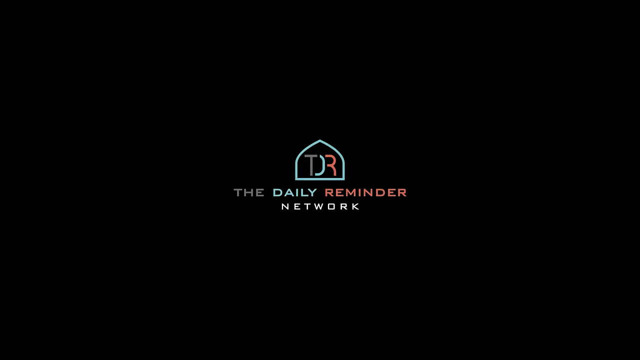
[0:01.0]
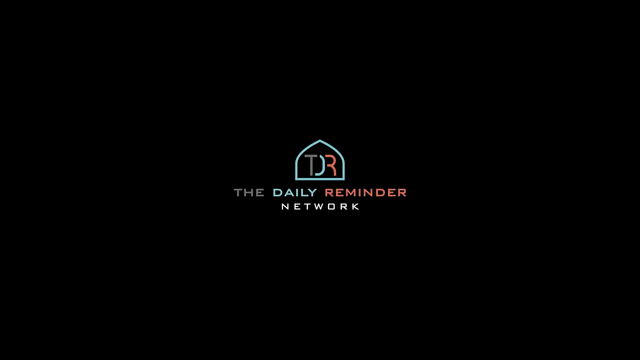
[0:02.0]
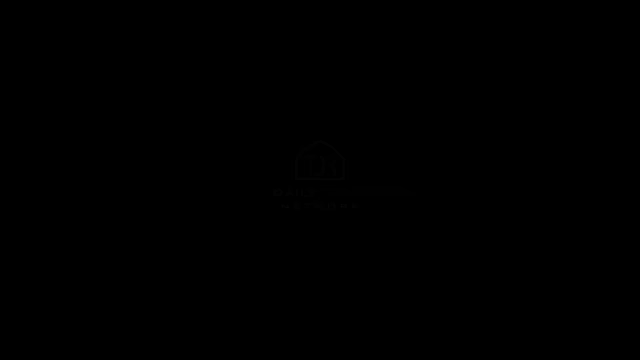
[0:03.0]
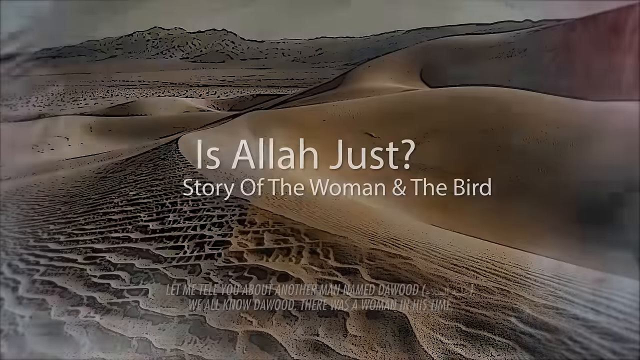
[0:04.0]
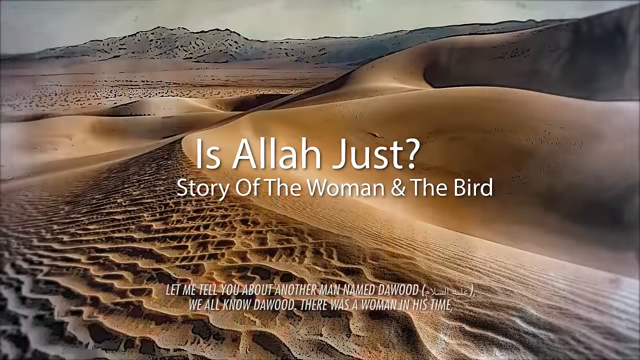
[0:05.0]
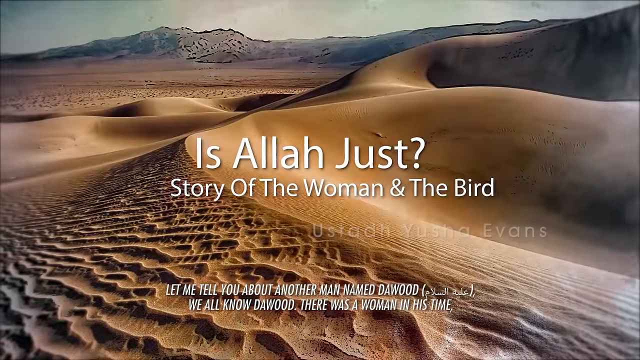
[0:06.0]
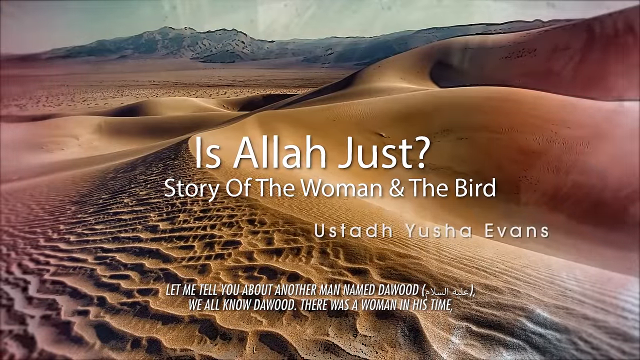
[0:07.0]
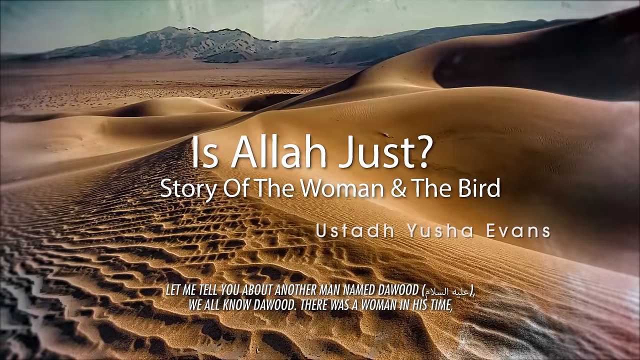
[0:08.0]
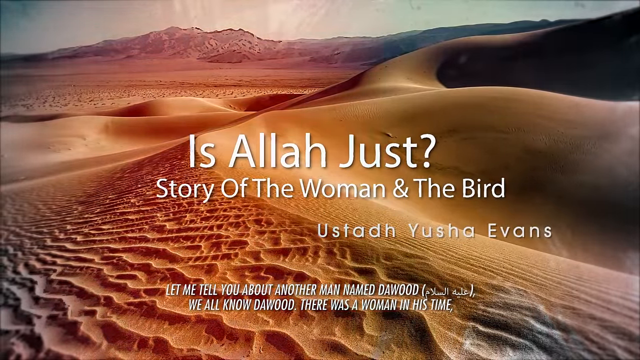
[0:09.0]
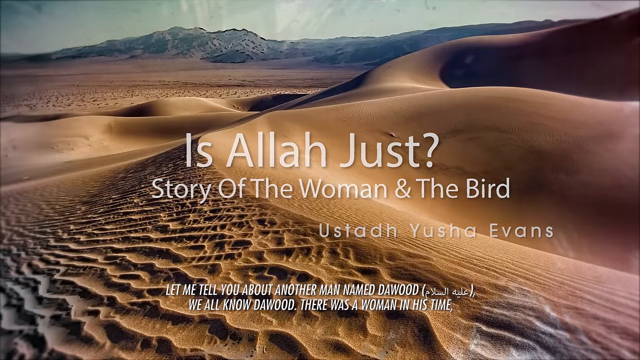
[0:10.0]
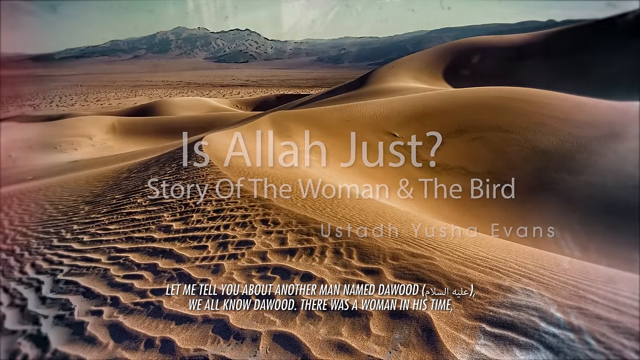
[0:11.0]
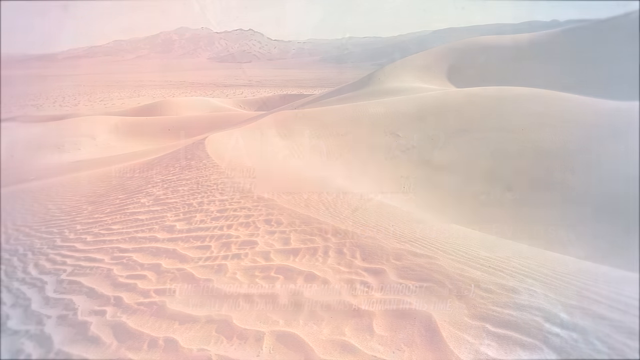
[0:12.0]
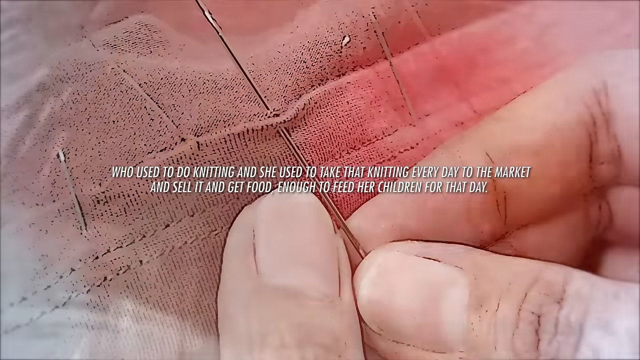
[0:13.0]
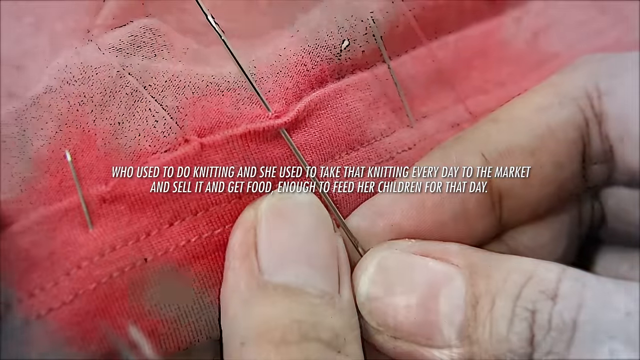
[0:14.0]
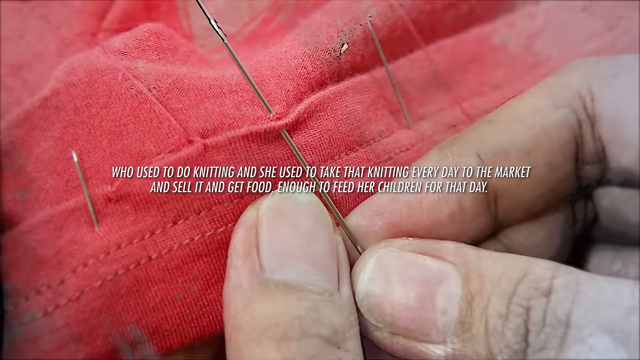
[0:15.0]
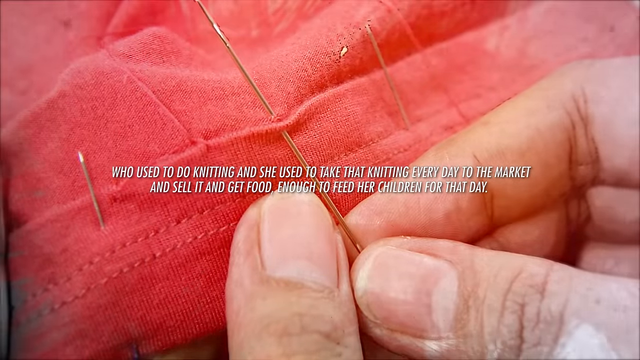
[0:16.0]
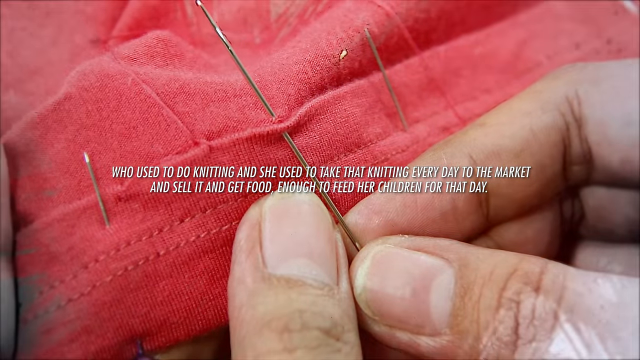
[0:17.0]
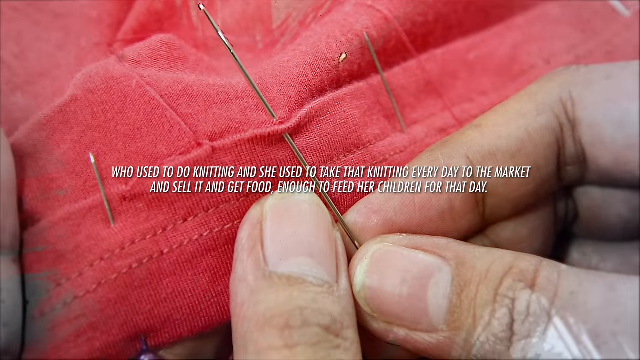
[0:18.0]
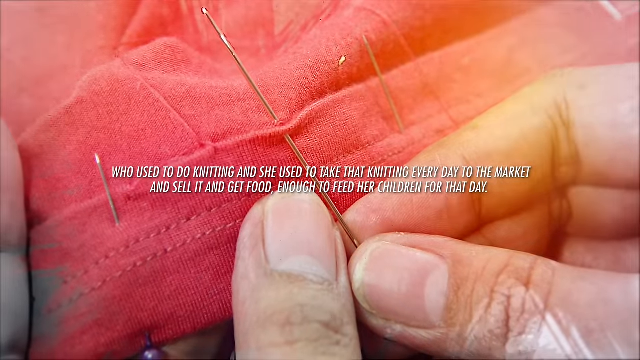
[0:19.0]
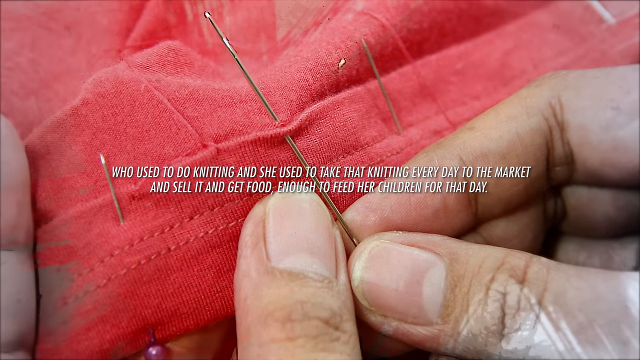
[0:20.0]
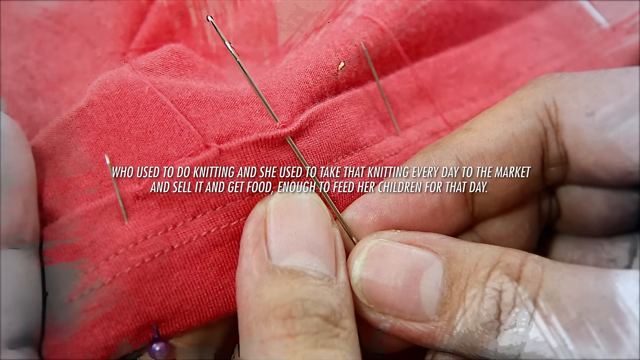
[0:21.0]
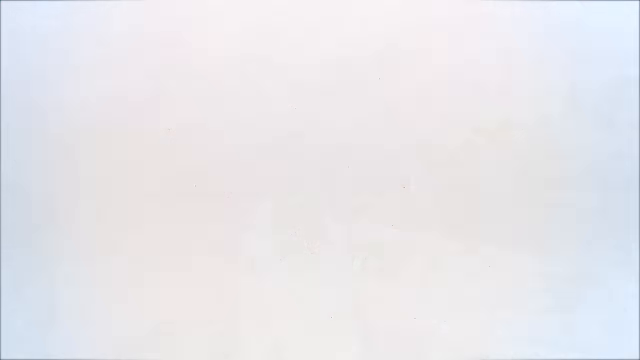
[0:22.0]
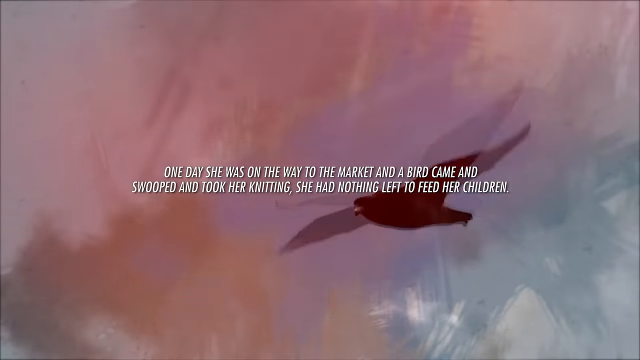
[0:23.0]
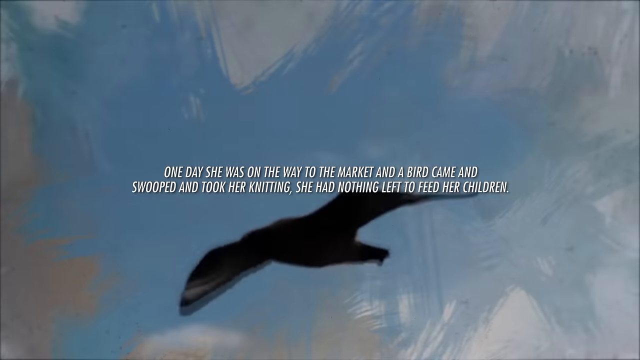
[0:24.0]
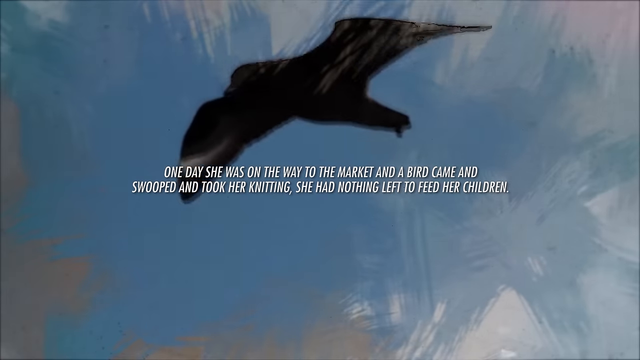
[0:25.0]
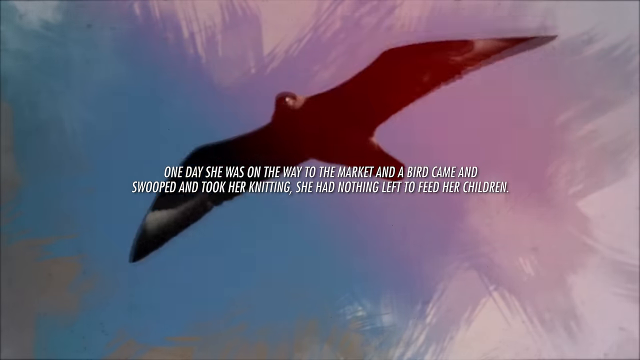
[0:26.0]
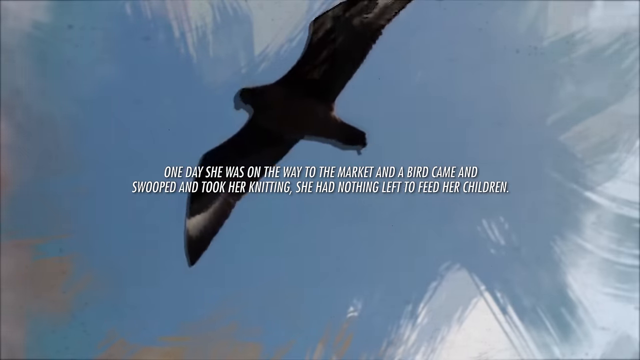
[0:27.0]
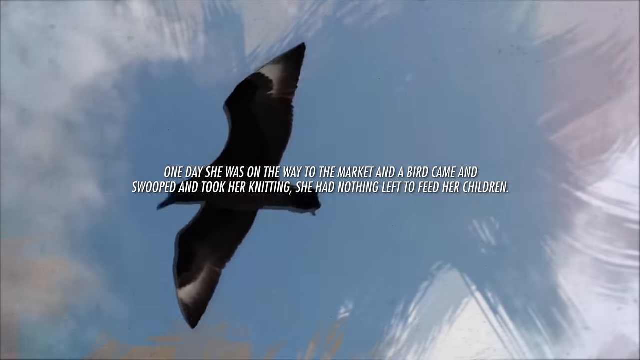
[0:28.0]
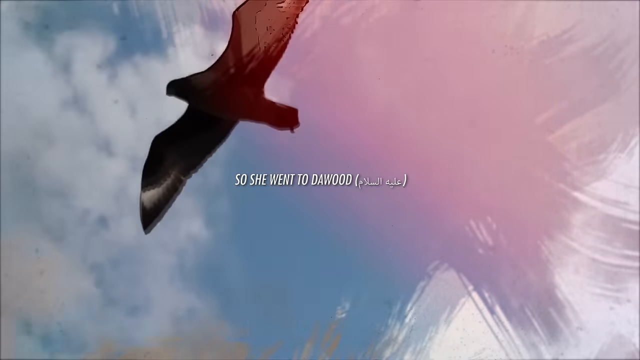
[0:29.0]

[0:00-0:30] The video opens on a black screen, and text slowly appears in the middle reading "The Daily Reminder Network," with "Network" below "Daily Reminder." All of the text is in capital letters, and the words are in different colors: "The" is gray, "Daily" is a cyan sort of blue, and "Reminder" is light red. Above "Daily Reminder" is a very simple outline of a house, drawn in a blue outline like the cyan letters. Inside it are the letters TDR; the D is missing its left straight line and the R is also missing its straight line on the left, but together they can still be read as TDR. Next, a picture of a desert appears with text in the middle asking the question "is Allah just?" Below that it says "a story of the woman and the bird," and the author is Ustan Usha Evans. More captions follow below, saying "let me tell you about another man named Dawud," with Arabic in parentheses after it, and "we all know that there was a woman in his time," followed by more captions about the story. A close-up shows a hand pushing a threading needle through a red piece of cloth that has more needles sticking out of it. As more text shows up, the view is from below a black bird as it flies across from right to left.